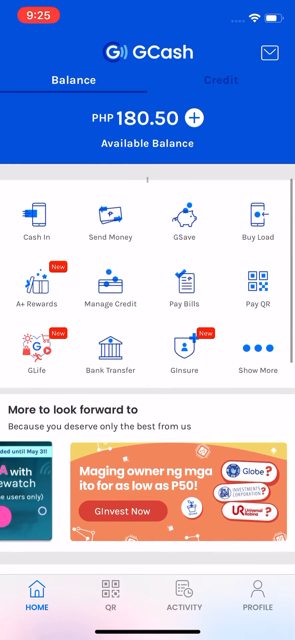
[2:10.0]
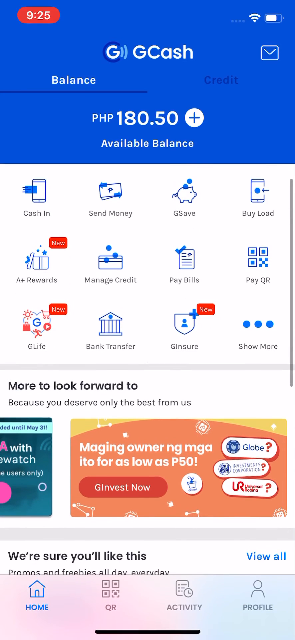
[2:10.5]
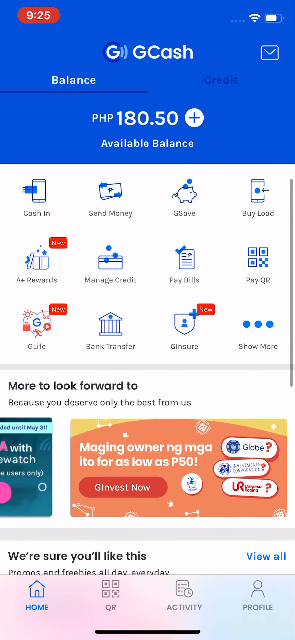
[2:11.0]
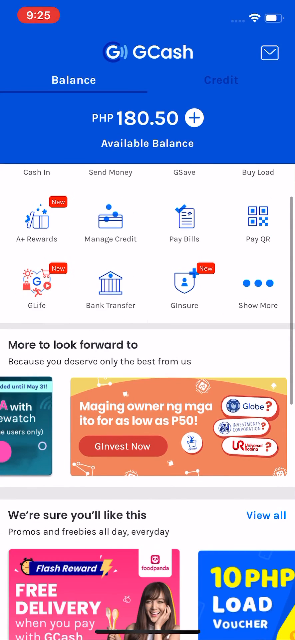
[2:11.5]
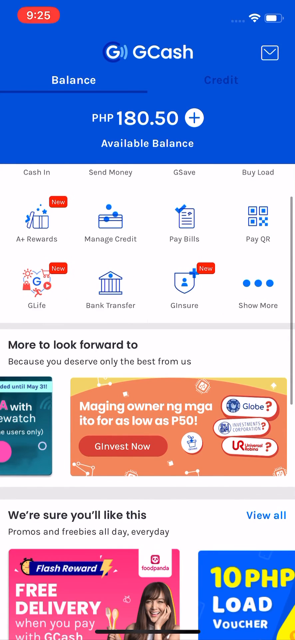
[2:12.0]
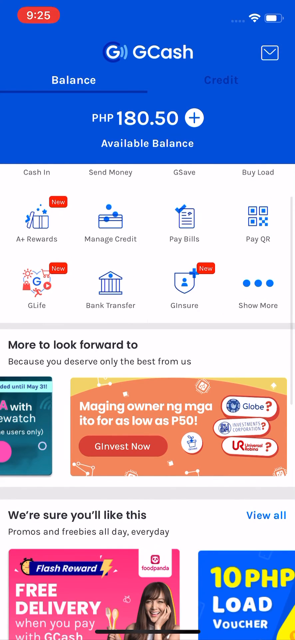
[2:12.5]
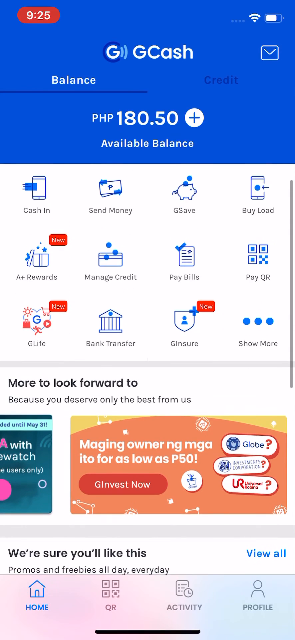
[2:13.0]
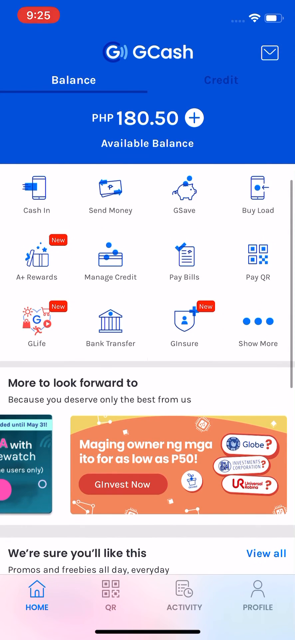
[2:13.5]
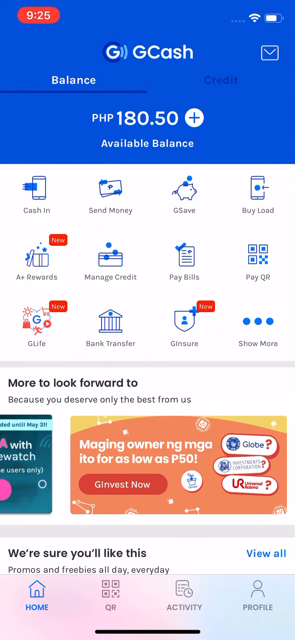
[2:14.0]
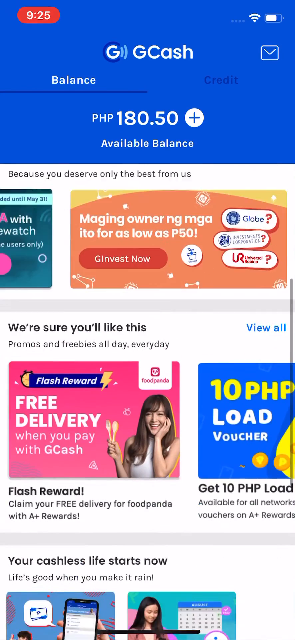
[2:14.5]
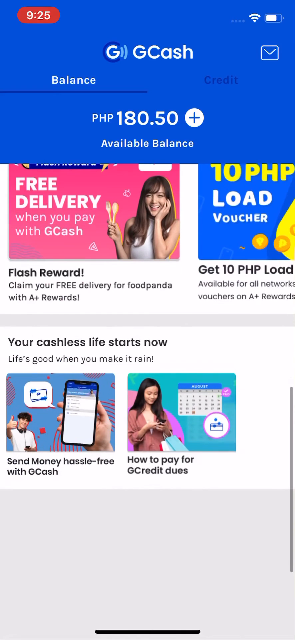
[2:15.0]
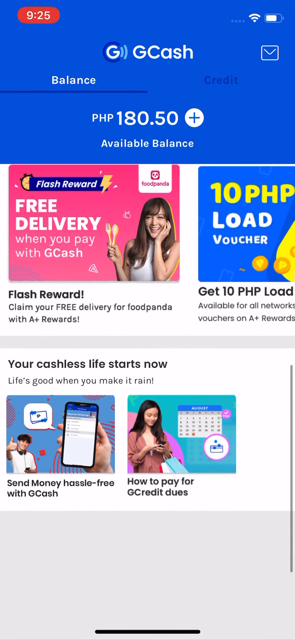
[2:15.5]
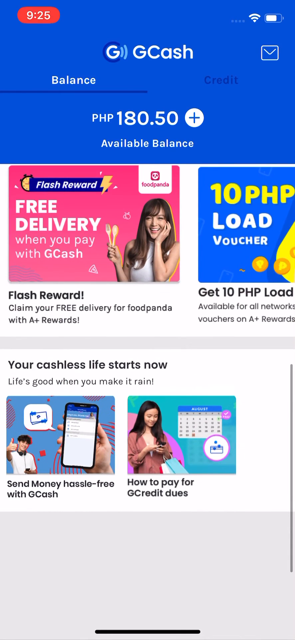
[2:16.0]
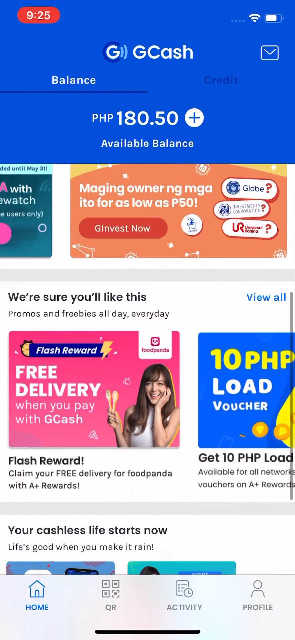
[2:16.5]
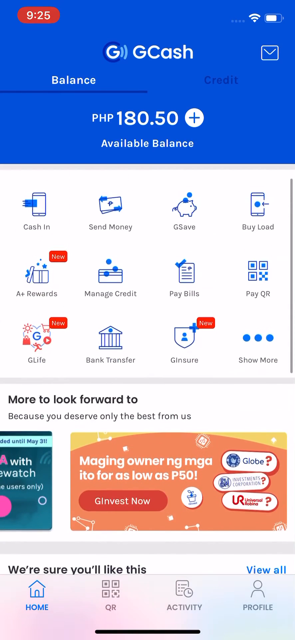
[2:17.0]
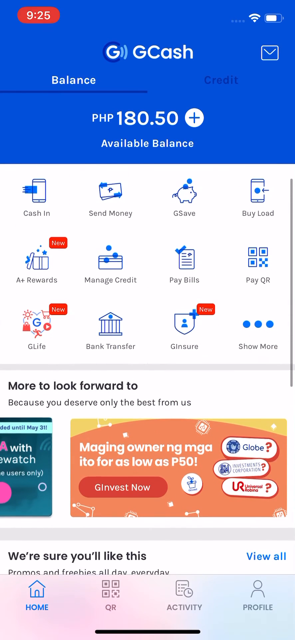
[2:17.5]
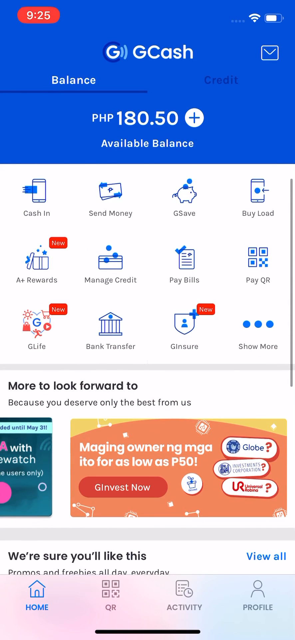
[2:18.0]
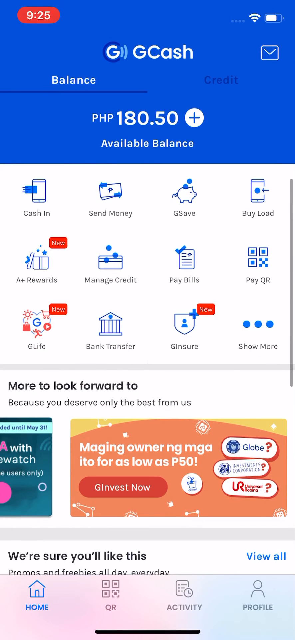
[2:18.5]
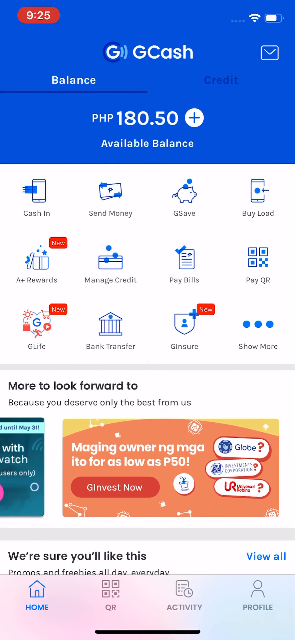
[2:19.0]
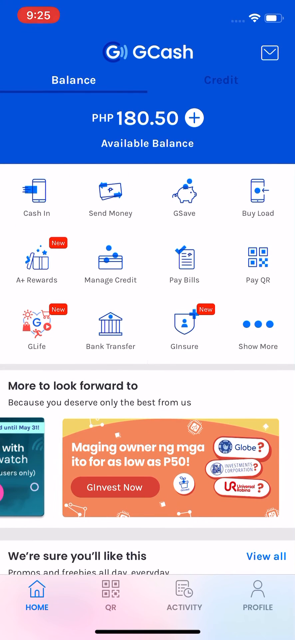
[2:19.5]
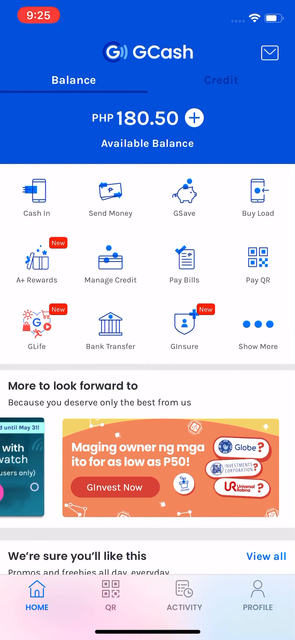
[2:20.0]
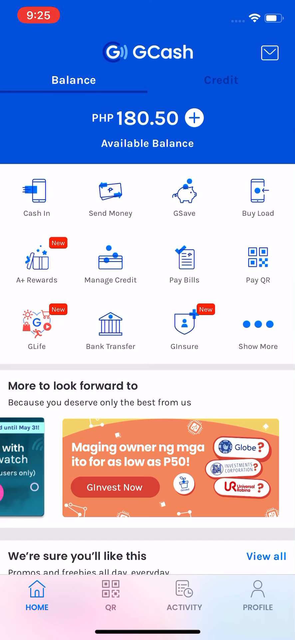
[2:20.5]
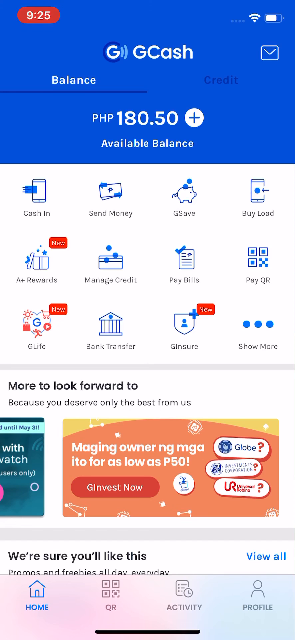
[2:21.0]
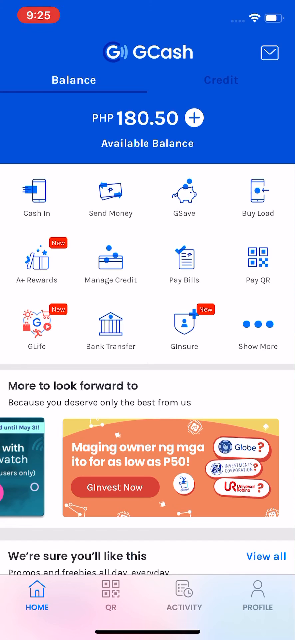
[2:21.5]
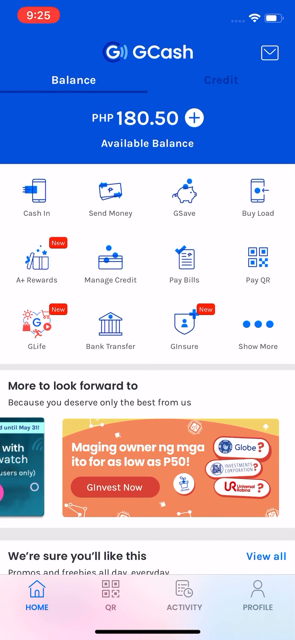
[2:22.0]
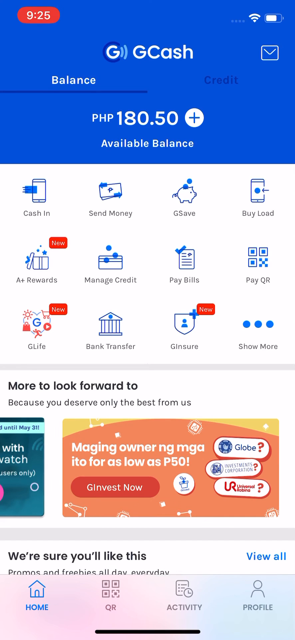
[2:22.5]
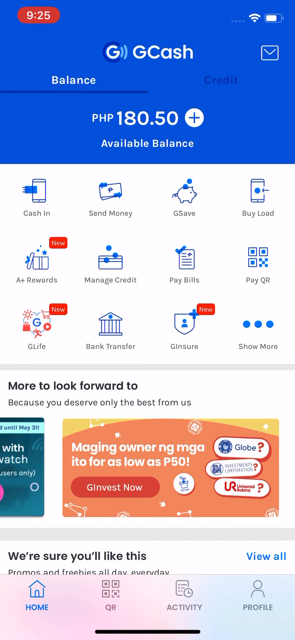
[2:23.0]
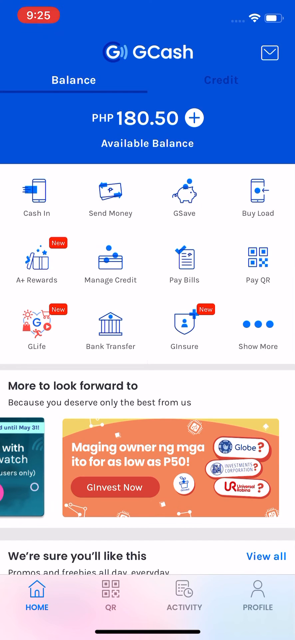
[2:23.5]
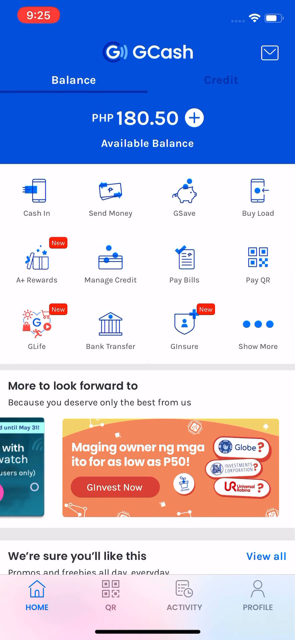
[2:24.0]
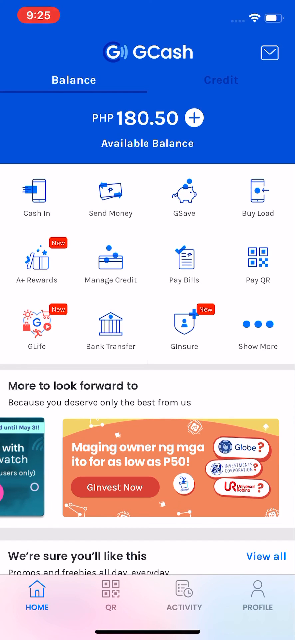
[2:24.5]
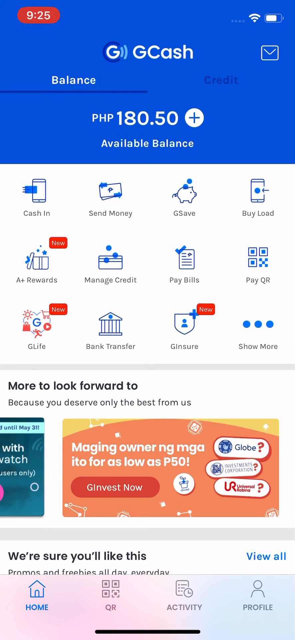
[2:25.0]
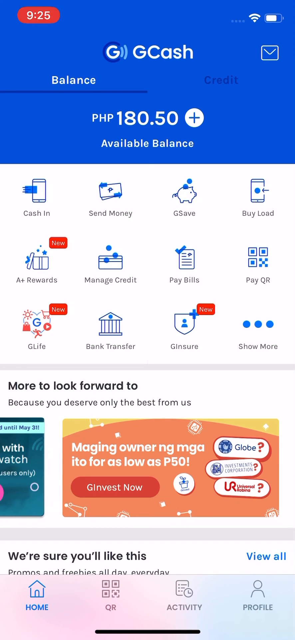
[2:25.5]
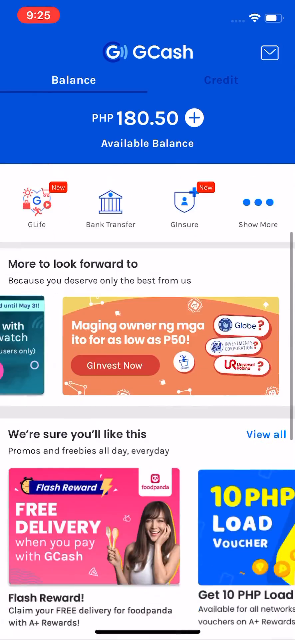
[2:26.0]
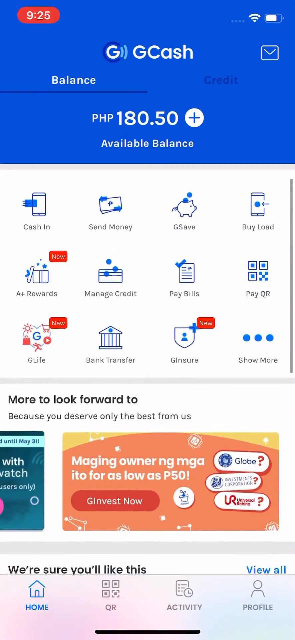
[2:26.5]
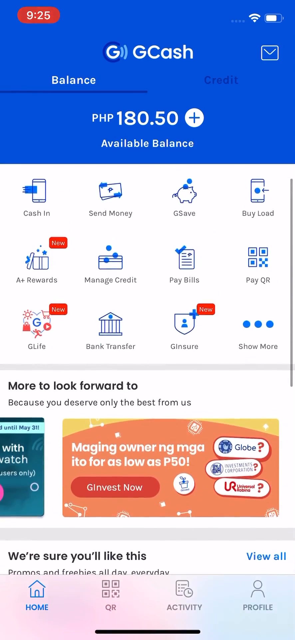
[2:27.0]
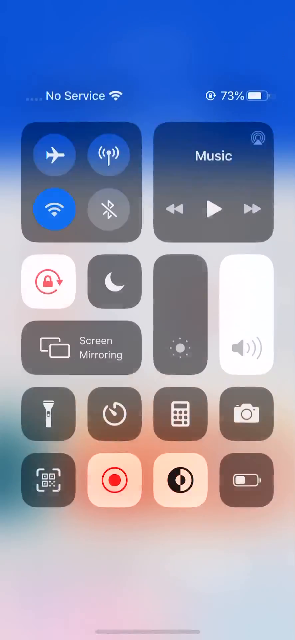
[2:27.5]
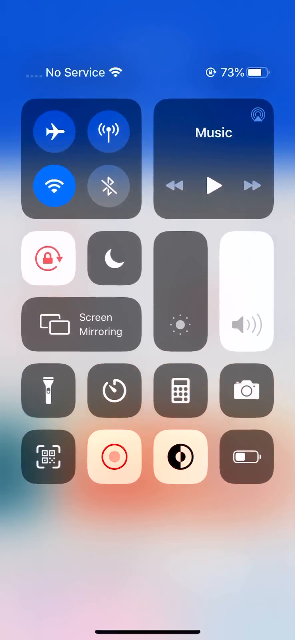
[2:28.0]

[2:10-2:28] The person scrolls back up to the 3x4 grid, then all the way down to the bottom, and back to the top where it says "more to look forward to." The screen stays still for a few seconds, then they quickly scroll down and up and pull down from the top of the screen to show the iPhone menu. It shows no service but Wi-Fi connected, and the battery is at 73%. There are widgets for airplane mode, Wi-Fi and Bluetooth, and on the right a music widget with nothing playing. At the bottom is a rotation widget, currently locked to portrait mode, along with brightness and sound controls; the brightness is set to zero and the sound to 100%. There is also a screen recording button, which the person presses, and the screen recording immediately stops.